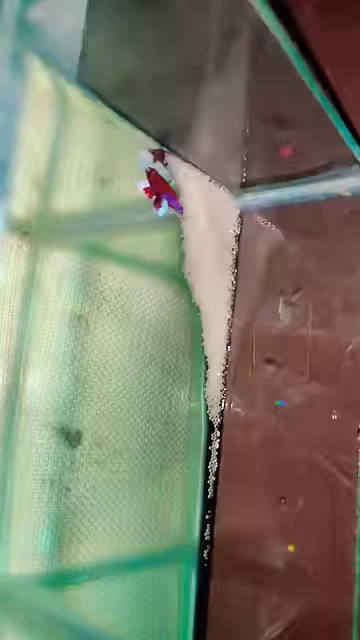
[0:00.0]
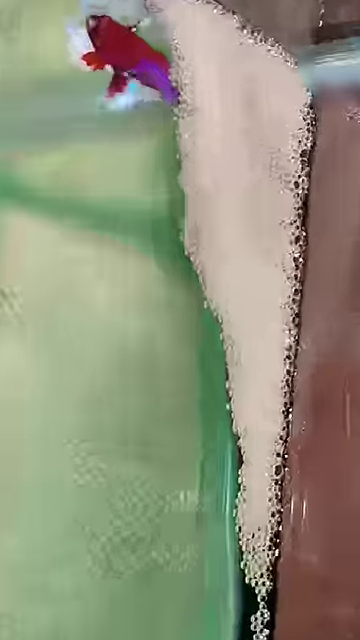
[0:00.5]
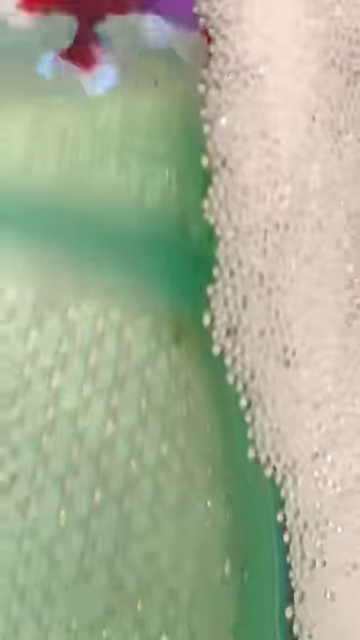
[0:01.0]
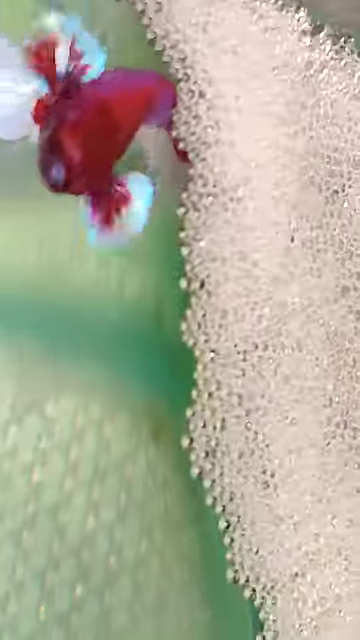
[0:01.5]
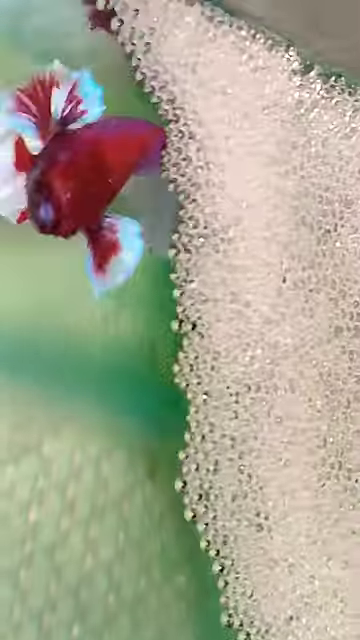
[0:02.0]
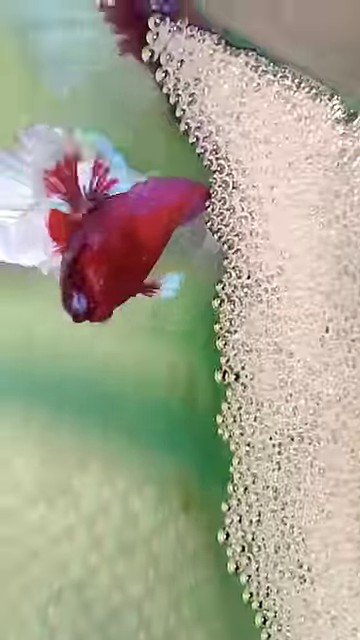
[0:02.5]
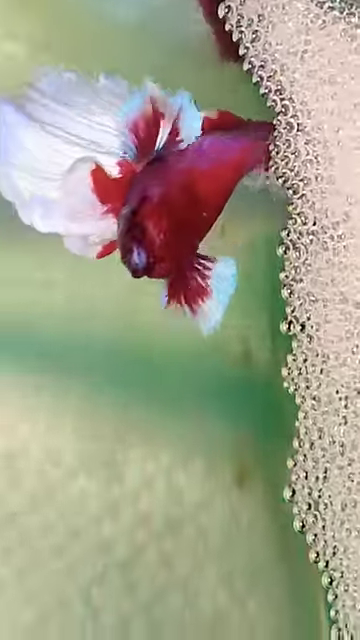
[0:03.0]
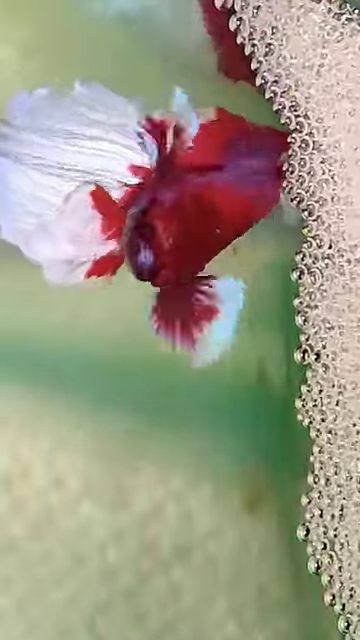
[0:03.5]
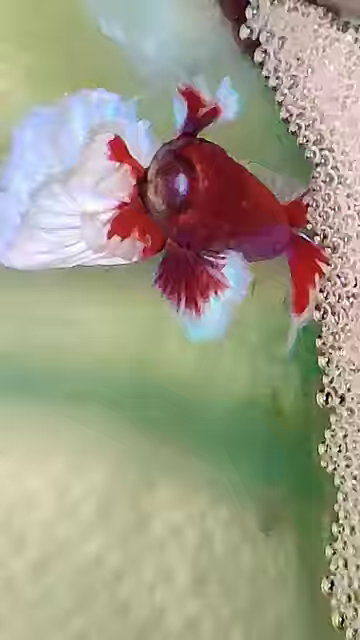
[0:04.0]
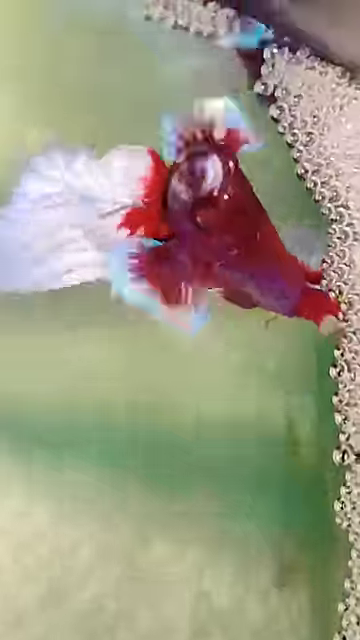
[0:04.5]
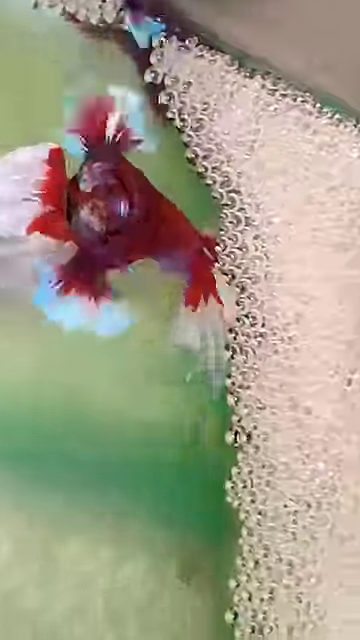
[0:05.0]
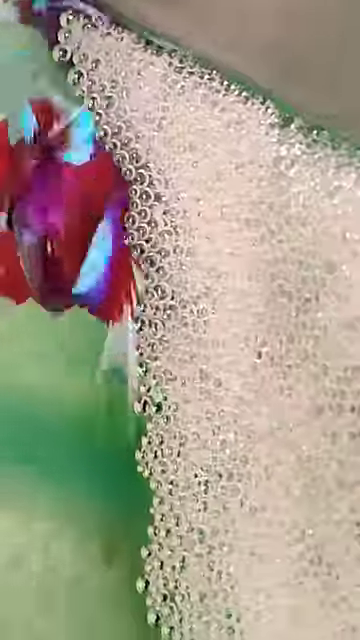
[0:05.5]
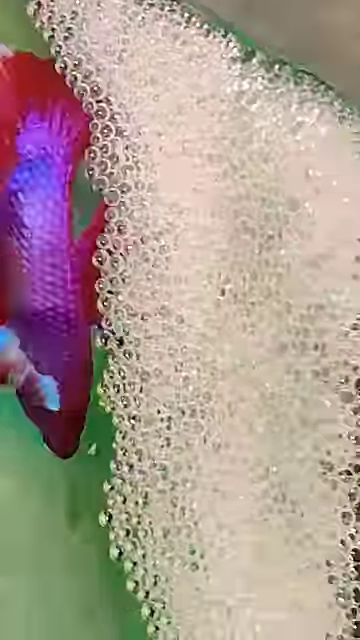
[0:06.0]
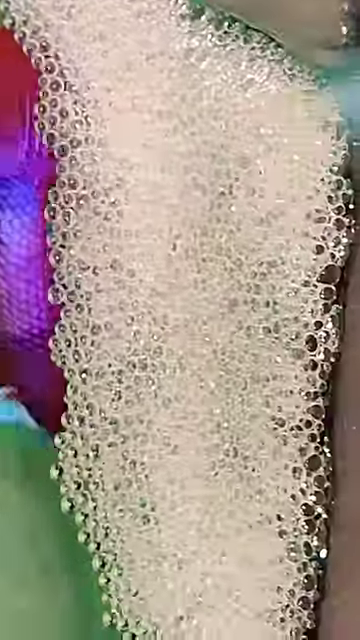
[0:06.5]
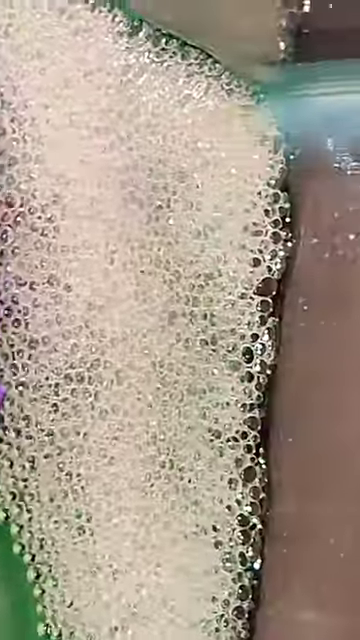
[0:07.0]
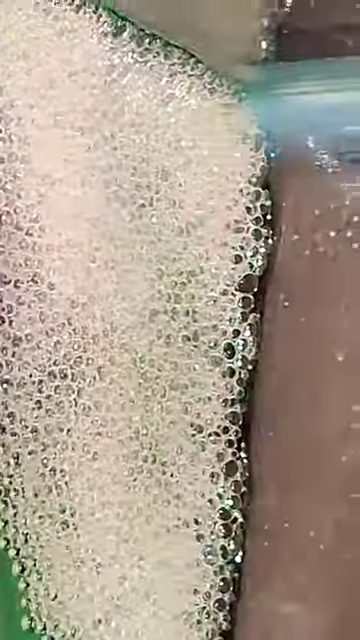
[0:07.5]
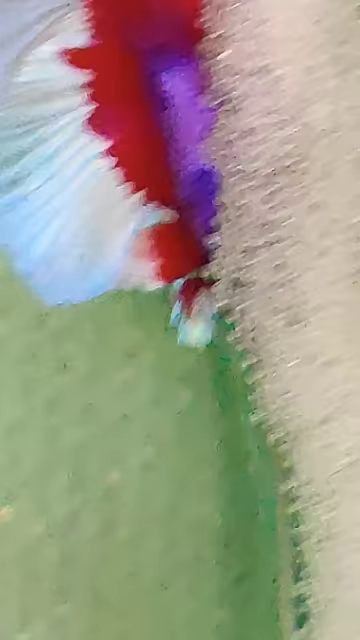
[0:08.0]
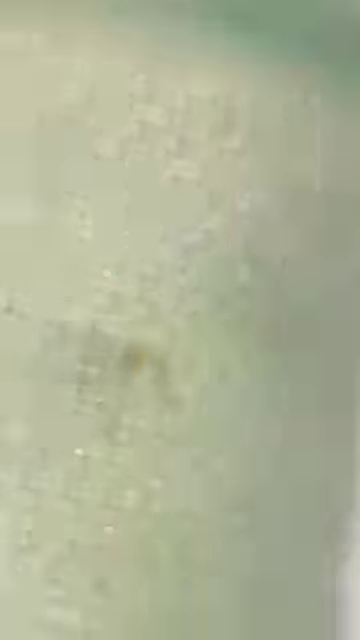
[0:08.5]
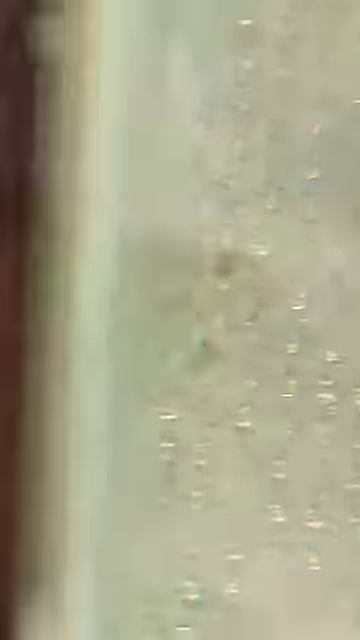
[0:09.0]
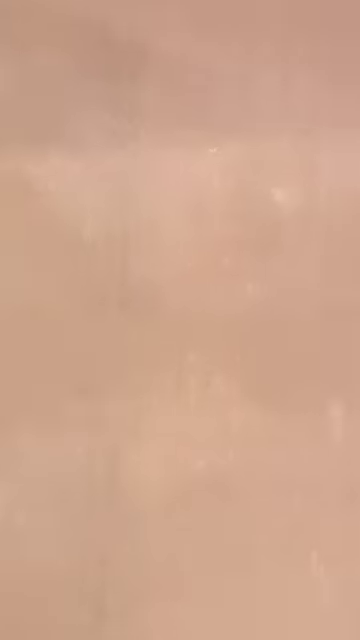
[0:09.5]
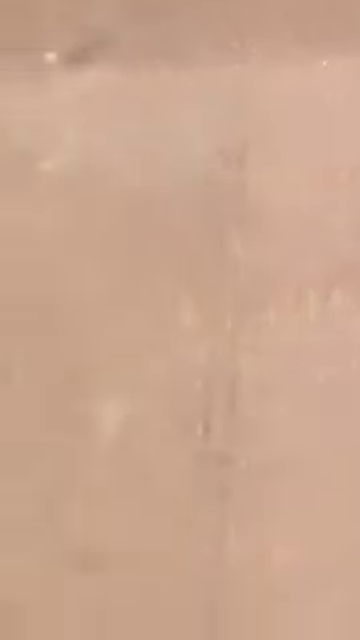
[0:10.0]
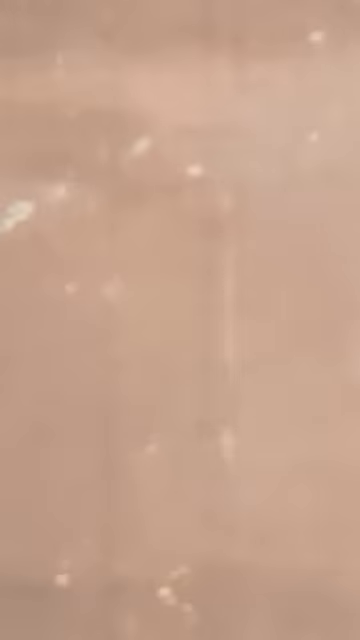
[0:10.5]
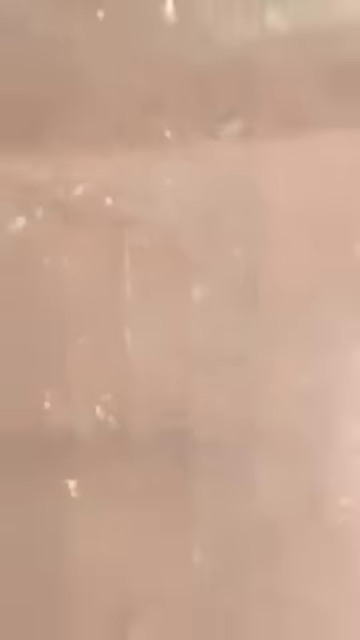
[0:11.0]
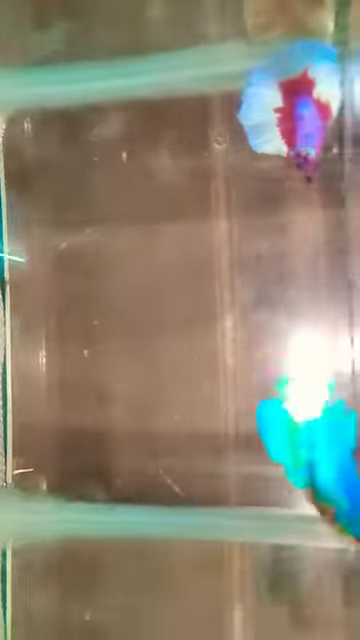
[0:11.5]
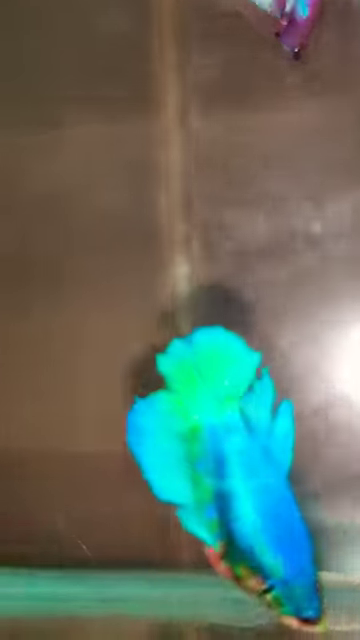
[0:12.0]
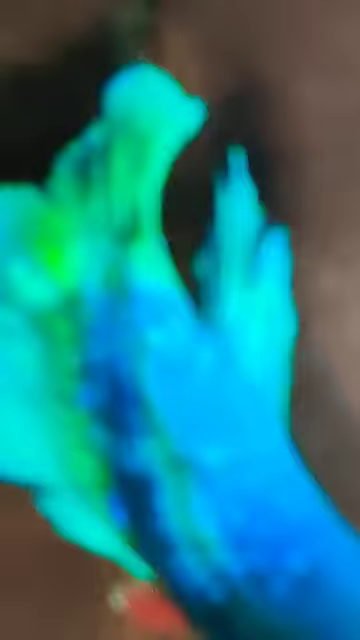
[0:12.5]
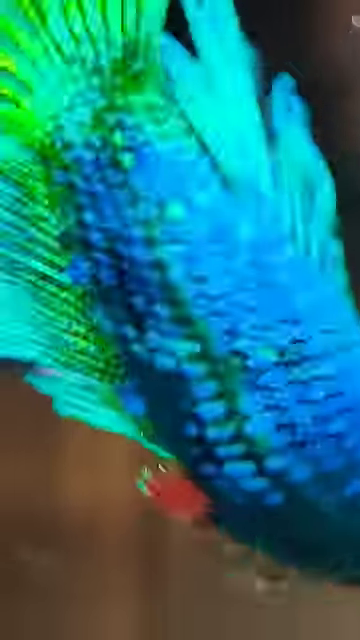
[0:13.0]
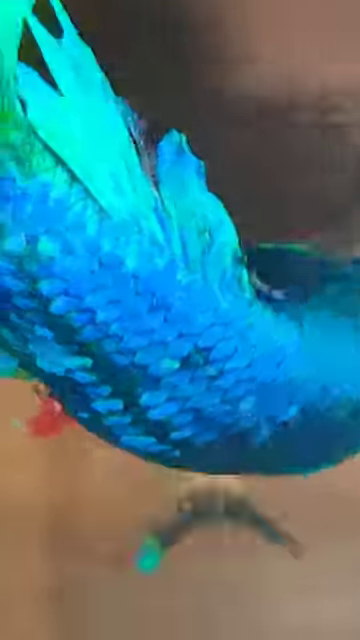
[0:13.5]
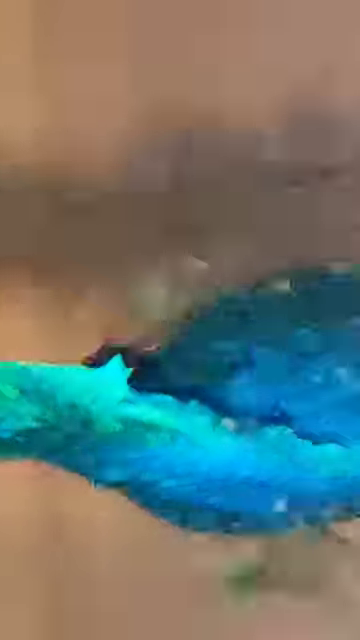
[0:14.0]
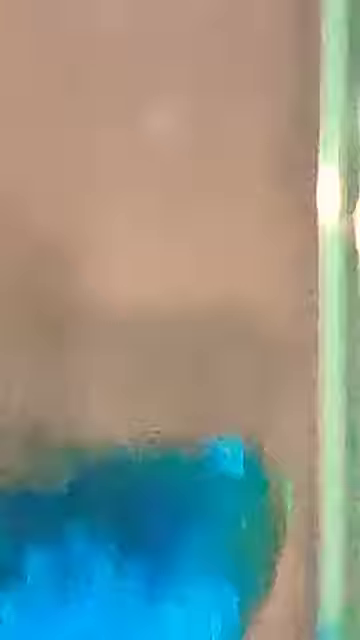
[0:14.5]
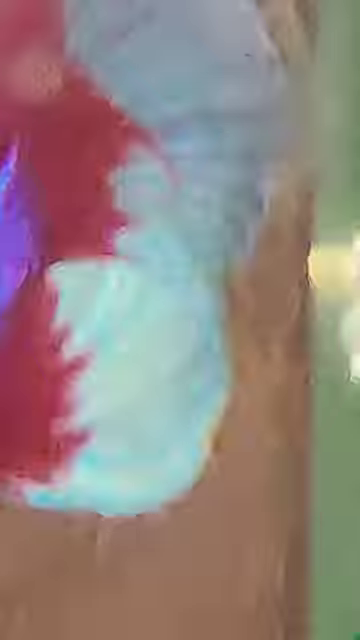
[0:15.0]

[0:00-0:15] What looks like a betta fish appears in an aquarium: a red betta fish with some silver-tipped fins. A blue betta fish is also in the same aquarium, its coloring dark blues with some light greens mixed in. In the corner of the aquarium, near the red betta fish, there is a huge mass of eggs, hard to count but at least over 100, maybe over 200 or 300. The fish swims around the surface. The footage is very zoomed in and filmed in a very tall portrait mode, which limits the field of view, though the aquarium and the two betta fish can still be made out. The two fish are probably mates that produced the eggs, and the red betta fish is probably watching over them.